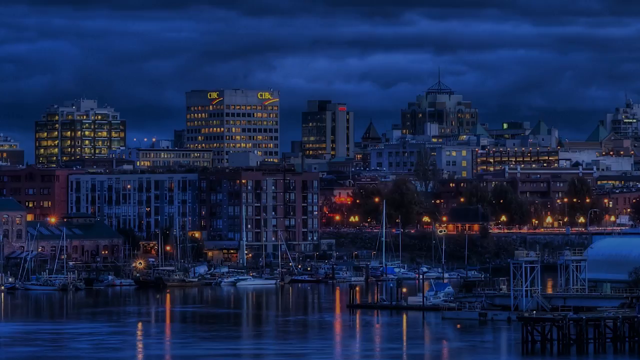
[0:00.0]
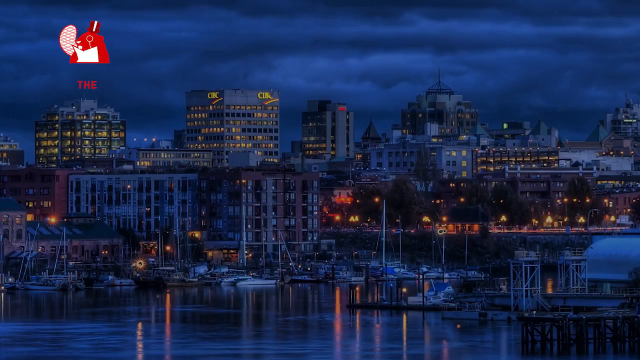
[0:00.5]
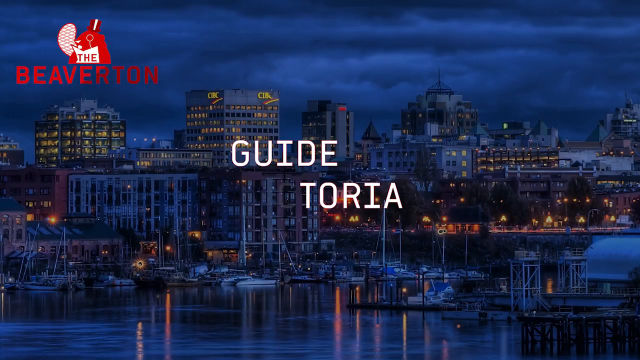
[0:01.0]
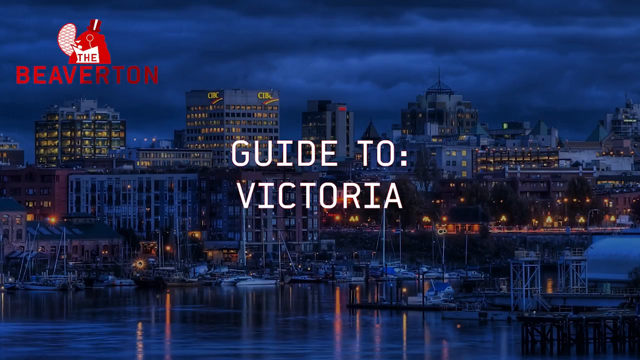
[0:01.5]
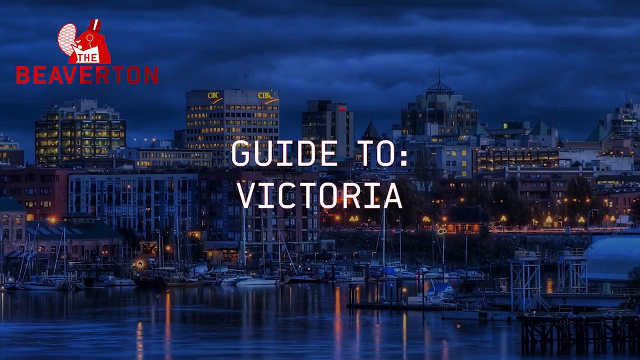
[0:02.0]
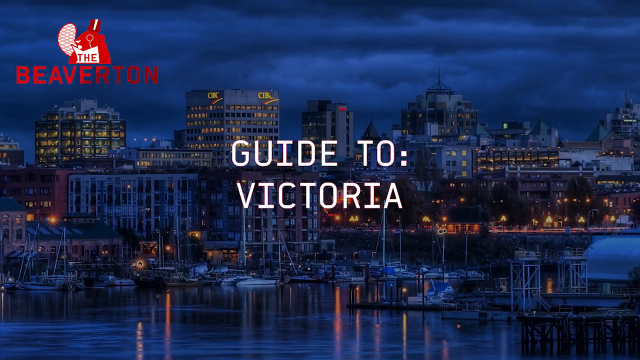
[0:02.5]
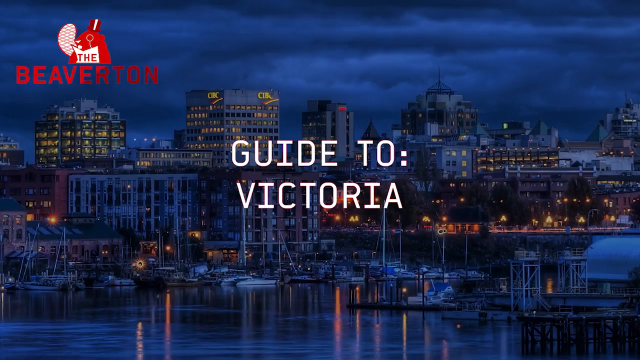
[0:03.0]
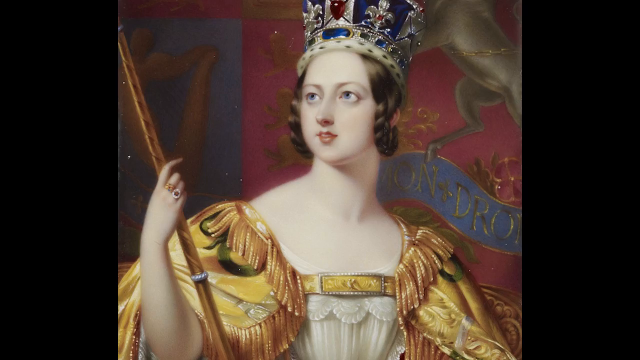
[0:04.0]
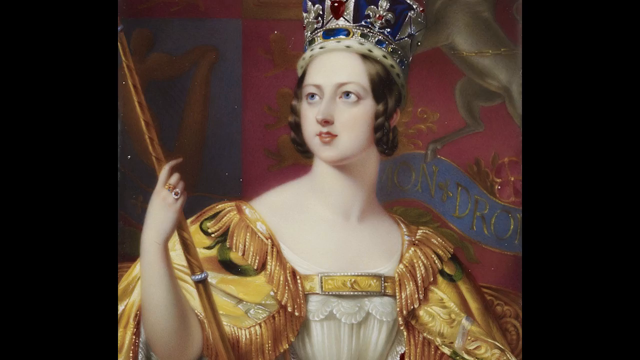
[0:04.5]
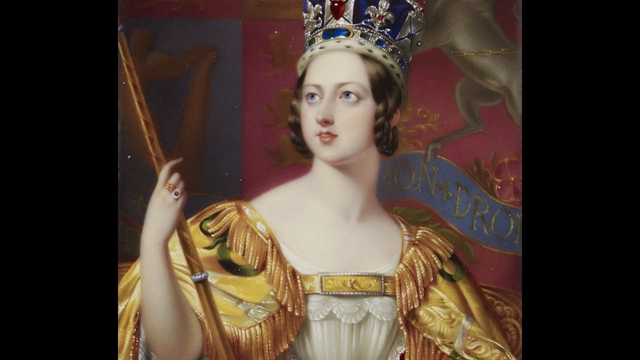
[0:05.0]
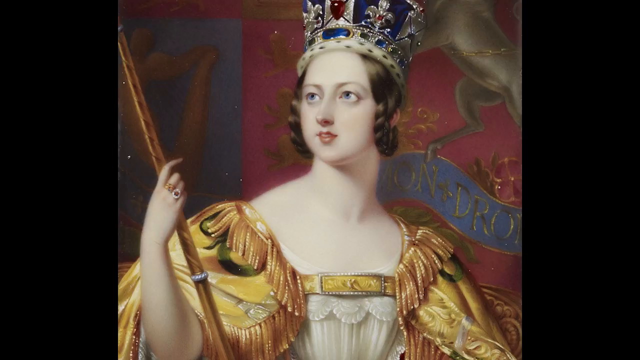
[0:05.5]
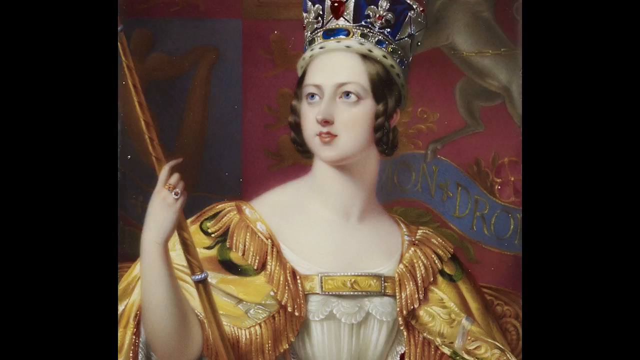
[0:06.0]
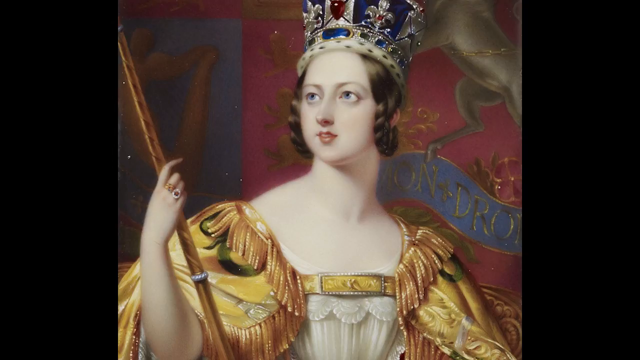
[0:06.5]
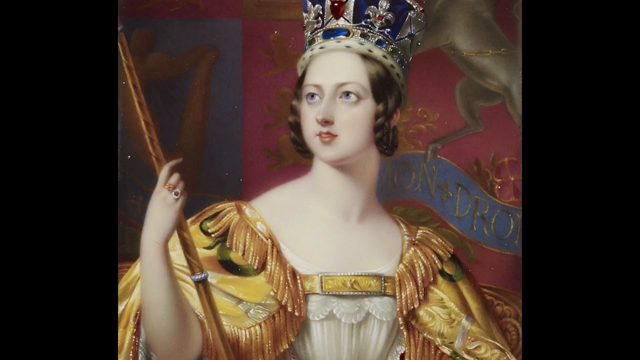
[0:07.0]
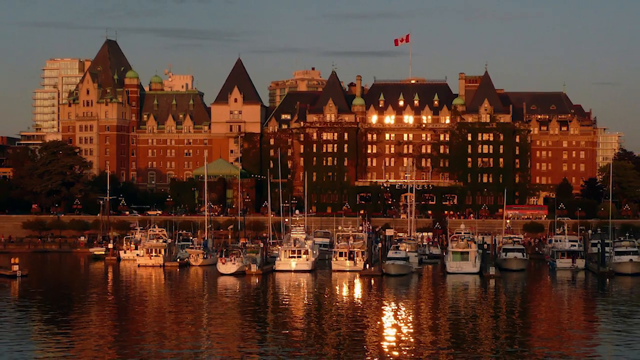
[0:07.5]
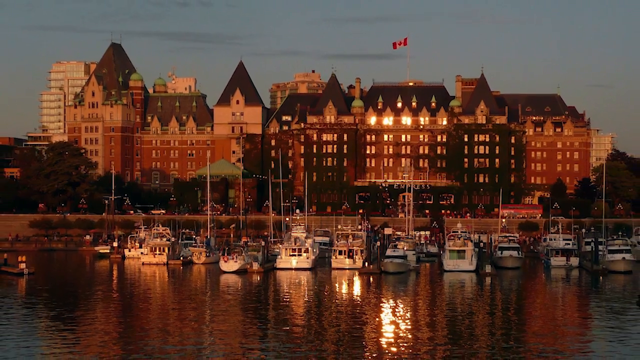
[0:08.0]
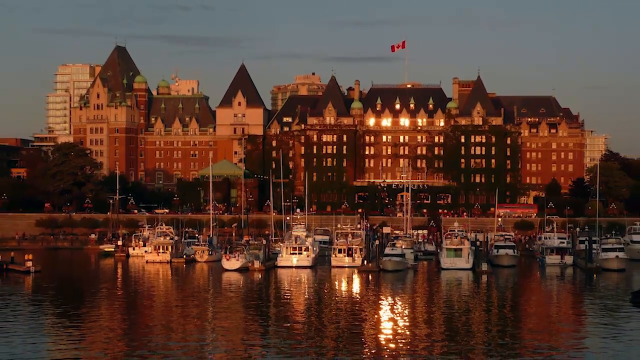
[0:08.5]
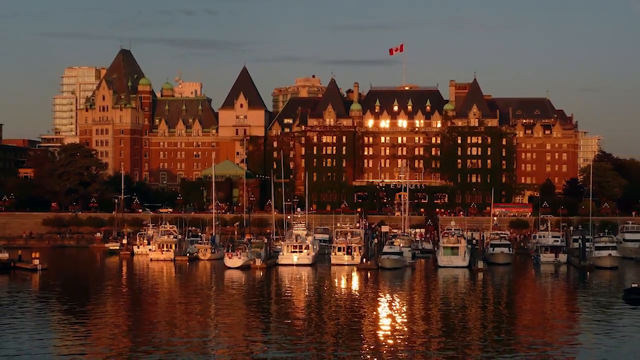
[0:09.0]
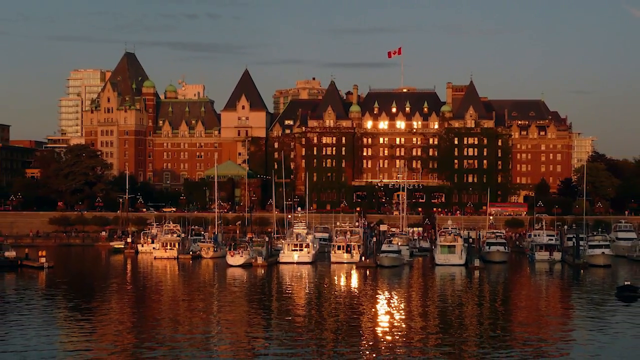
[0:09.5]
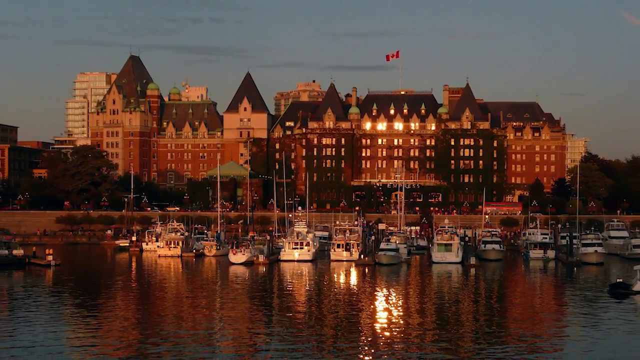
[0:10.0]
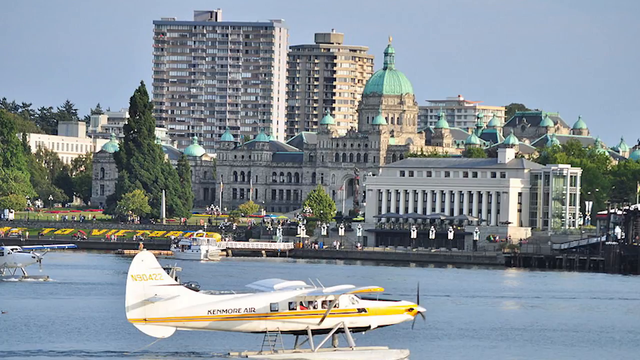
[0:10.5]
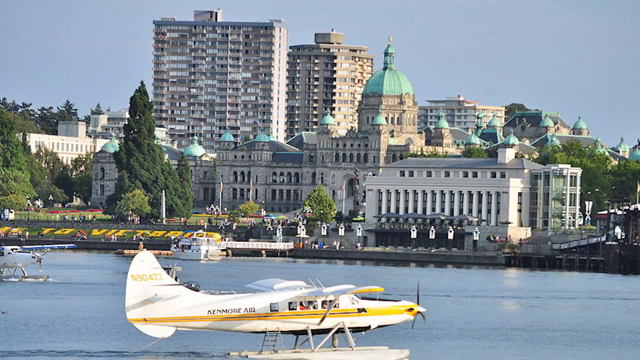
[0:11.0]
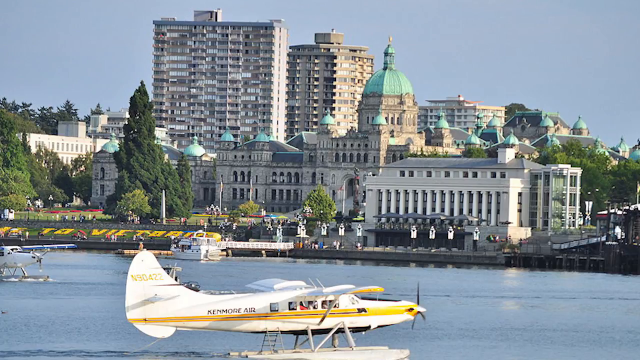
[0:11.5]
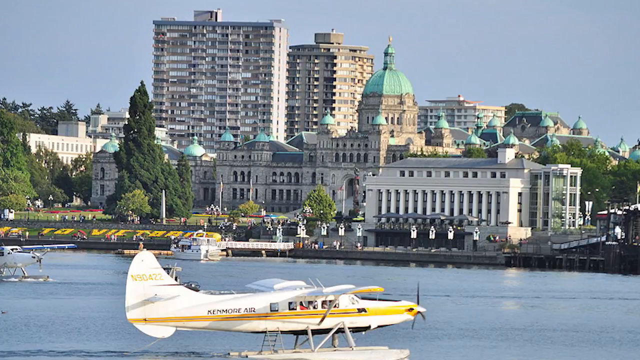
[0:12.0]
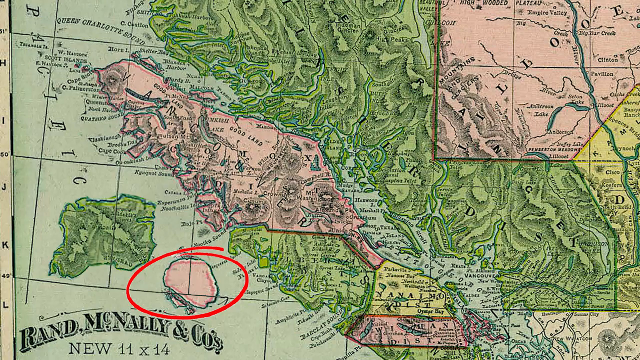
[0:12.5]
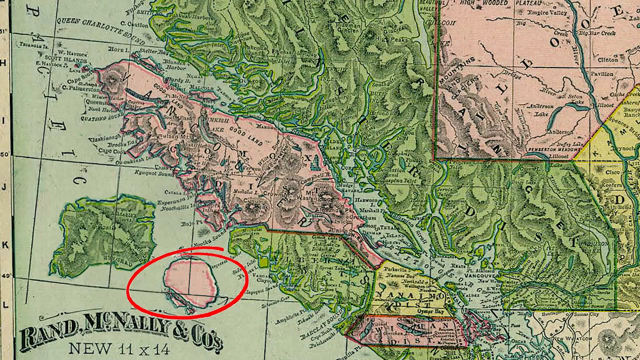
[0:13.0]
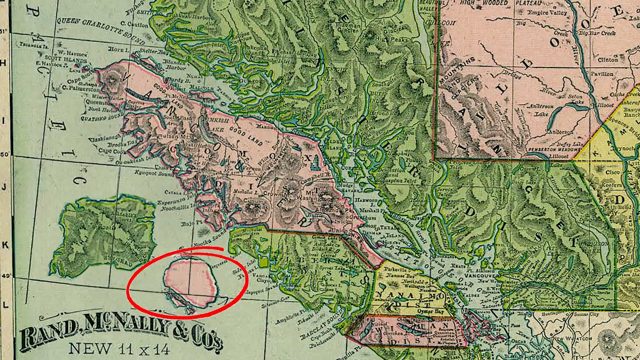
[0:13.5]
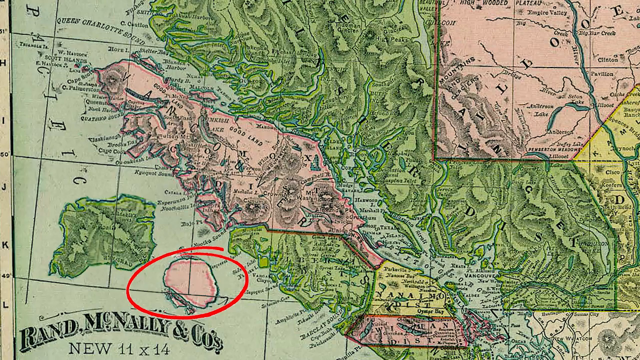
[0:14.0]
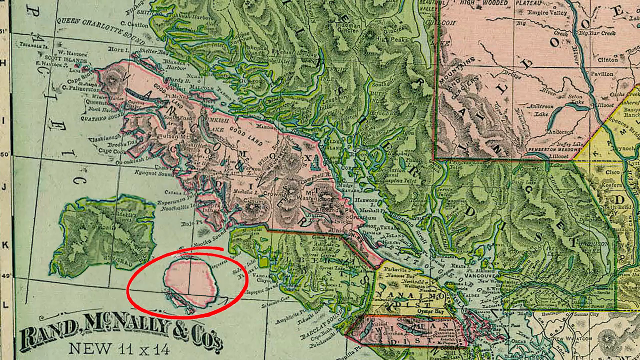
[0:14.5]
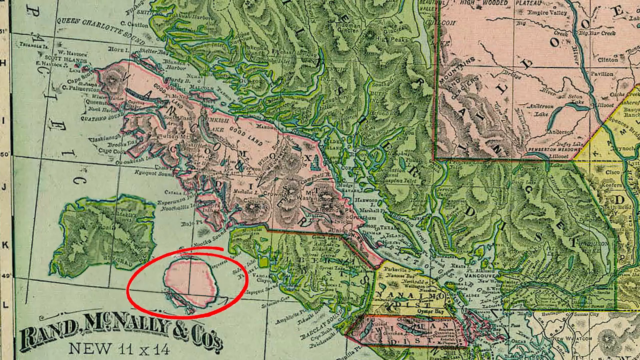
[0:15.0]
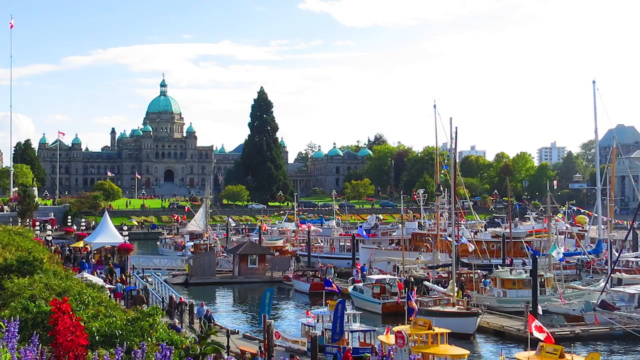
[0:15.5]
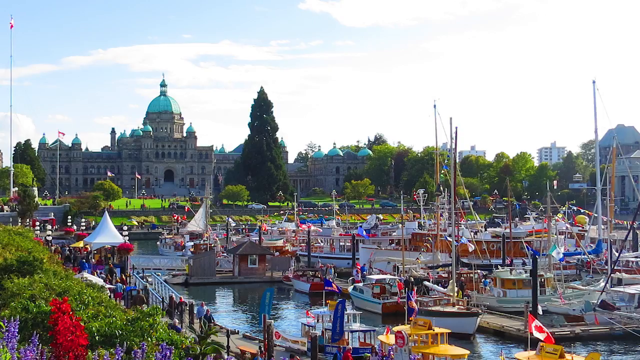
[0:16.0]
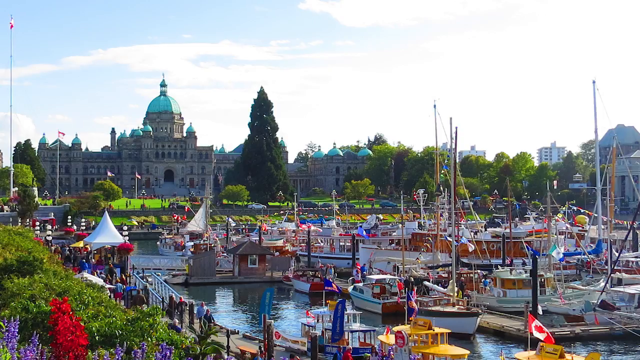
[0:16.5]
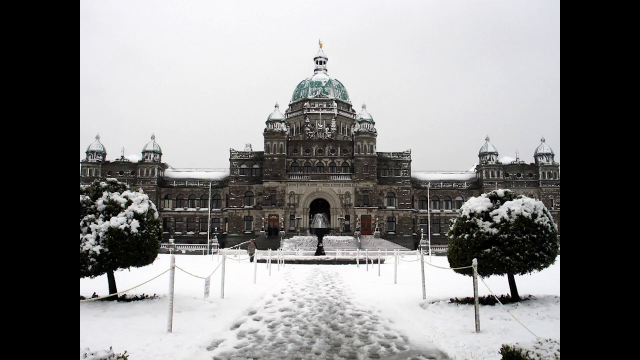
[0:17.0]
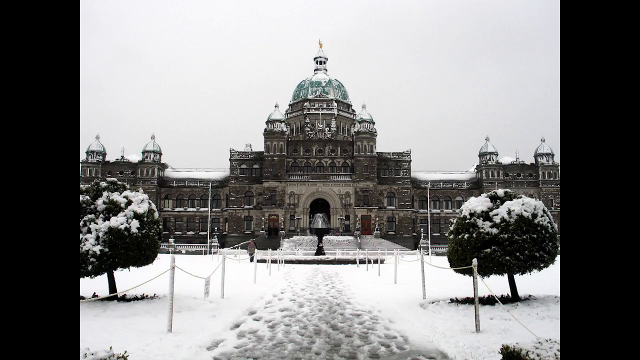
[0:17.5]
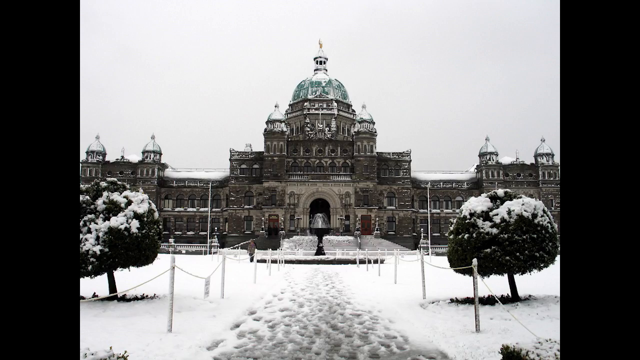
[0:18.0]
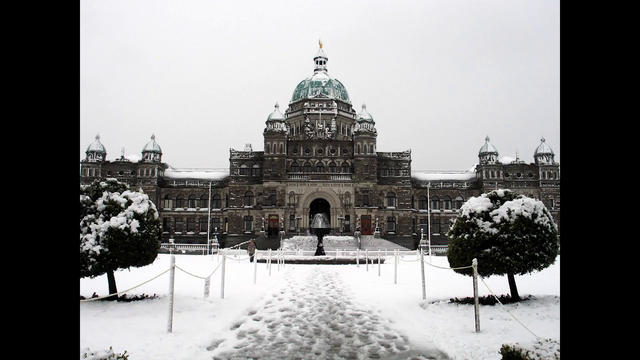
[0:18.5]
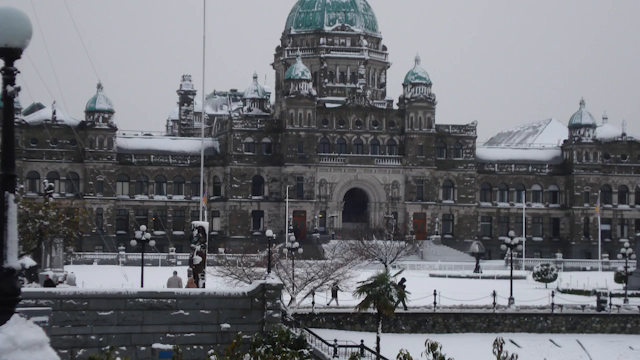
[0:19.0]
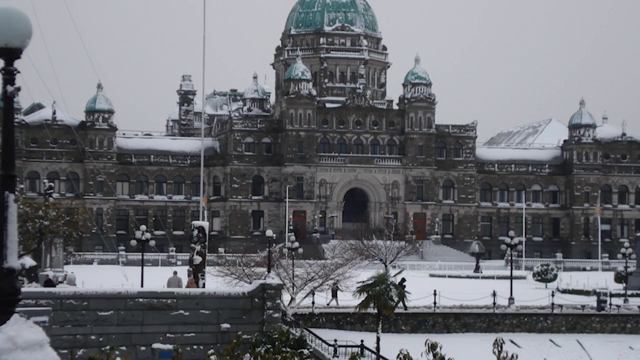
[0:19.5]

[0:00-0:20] A slide shows what looks like a cityscape with a harbor in front of it. In the foreground is white text that says "guide to Victoria," and in the top left corner is a red logo with text that says "the Beaverton" and a picture of a beaver in red. The cityscape picture was taken at night, and some lights are visible on the buildings. The video cuts to a painting of a woman holding a stick in her right hand. She wears a yellow fluffy dress and a blue crown with gems on it; the gem in the middle looks red. Next comes an image of a building with the Canadian flag on top and a harbor in the foreground. Then it cuts to another building, which also seems to have a body of water in front of it; this building is kind of a brownish white color with green domes on top.